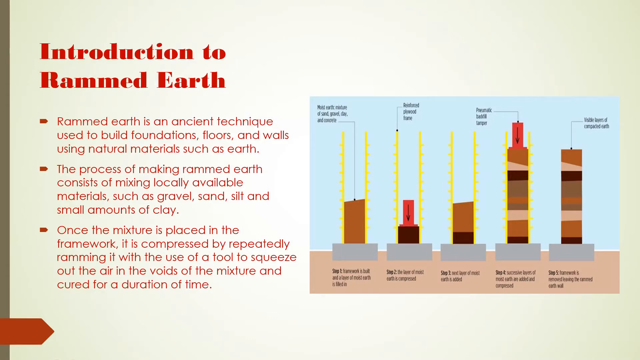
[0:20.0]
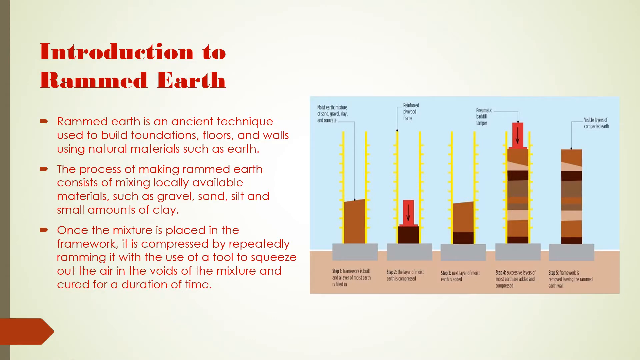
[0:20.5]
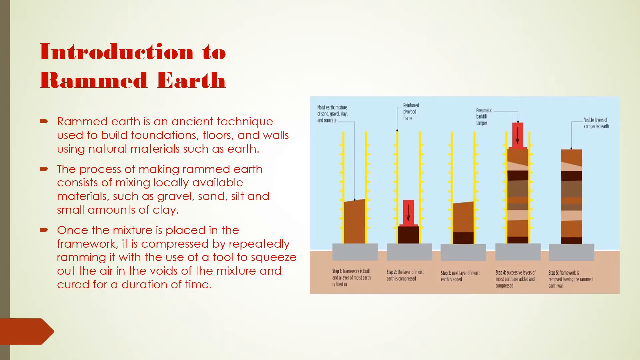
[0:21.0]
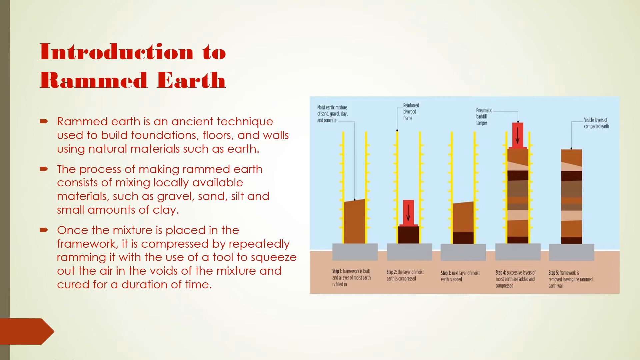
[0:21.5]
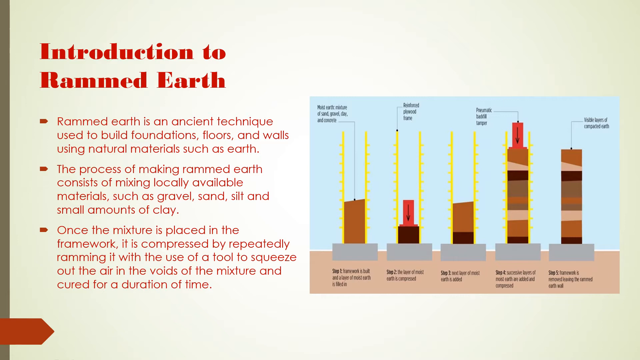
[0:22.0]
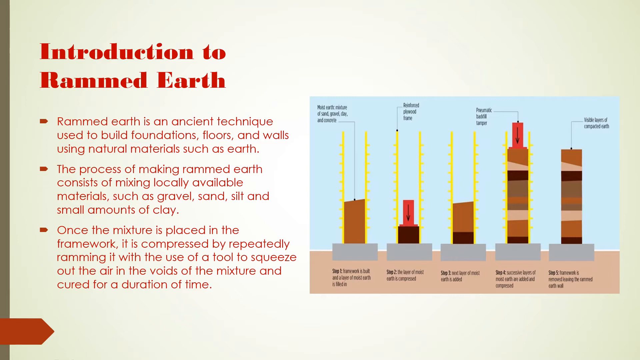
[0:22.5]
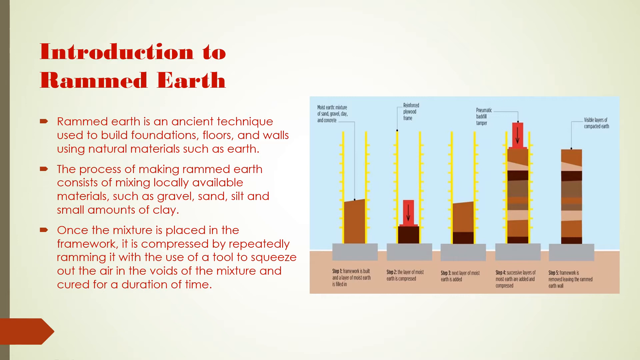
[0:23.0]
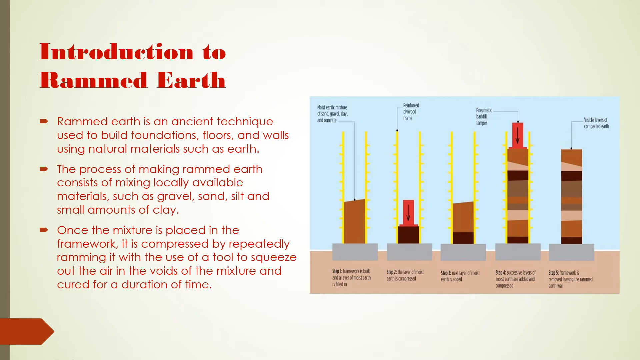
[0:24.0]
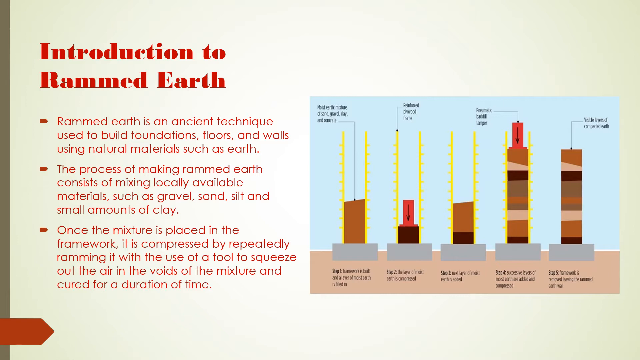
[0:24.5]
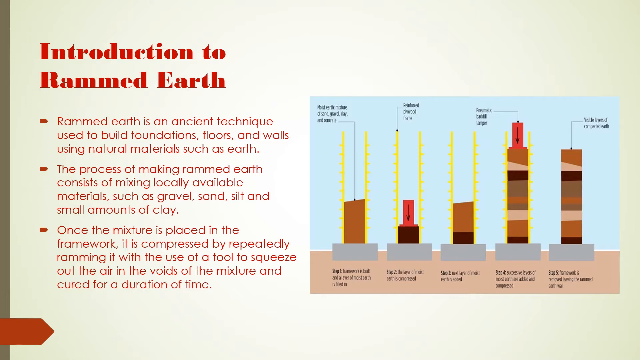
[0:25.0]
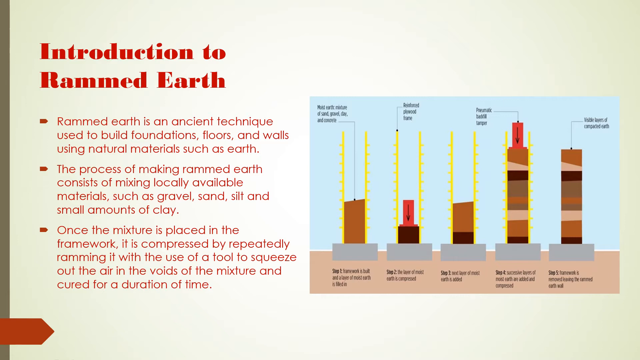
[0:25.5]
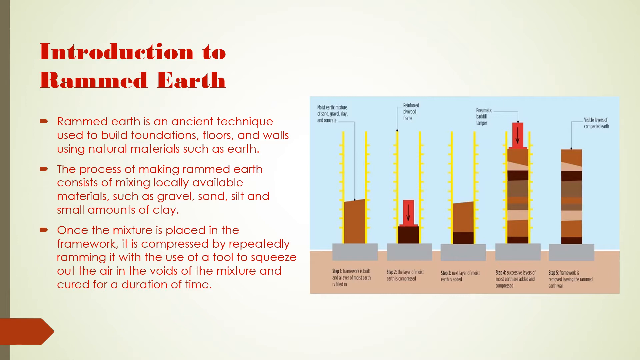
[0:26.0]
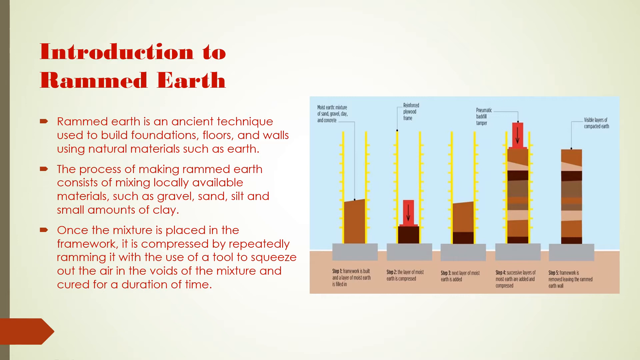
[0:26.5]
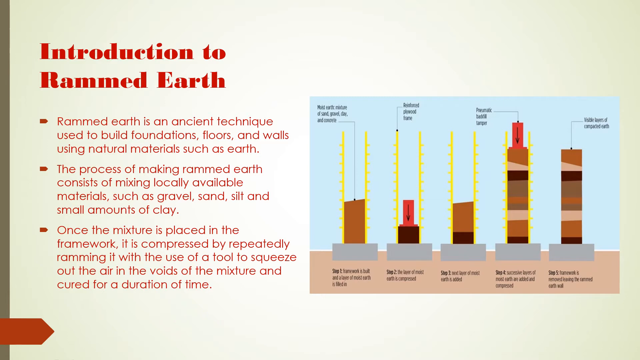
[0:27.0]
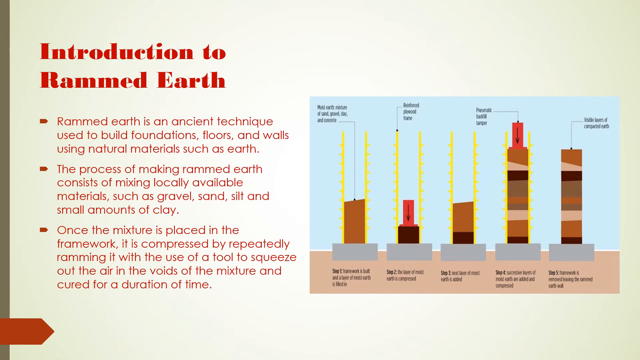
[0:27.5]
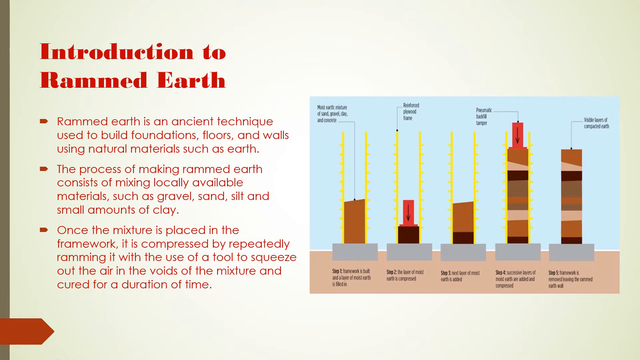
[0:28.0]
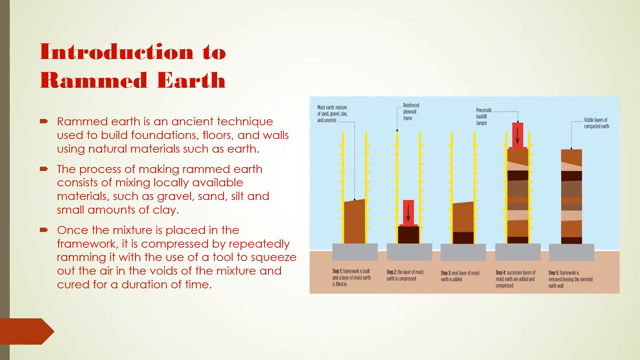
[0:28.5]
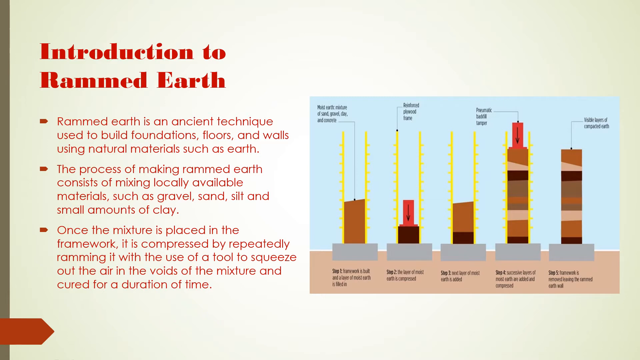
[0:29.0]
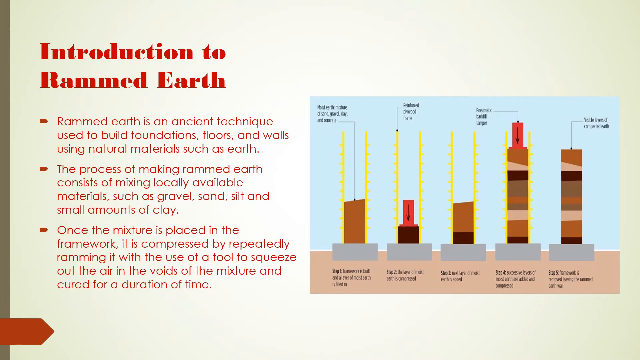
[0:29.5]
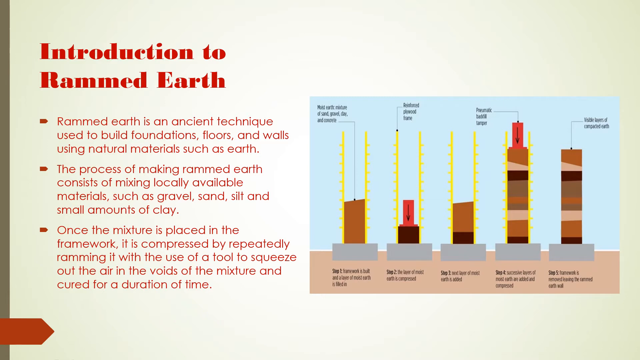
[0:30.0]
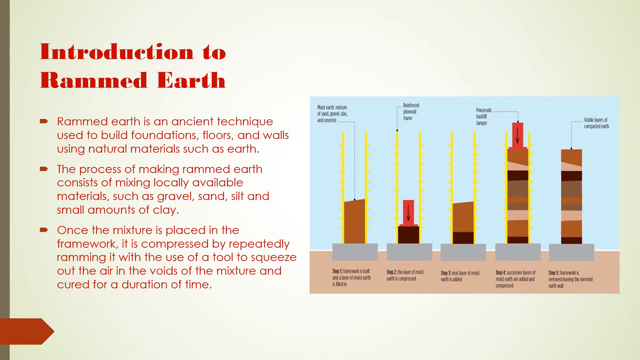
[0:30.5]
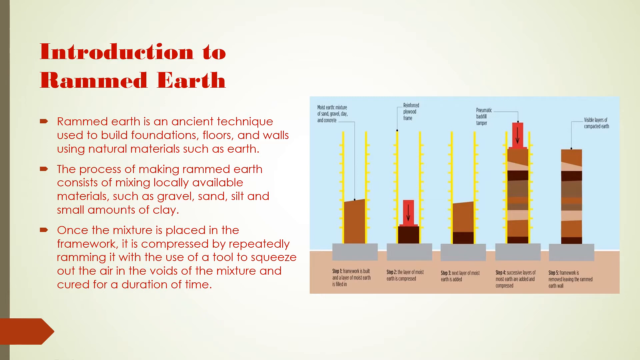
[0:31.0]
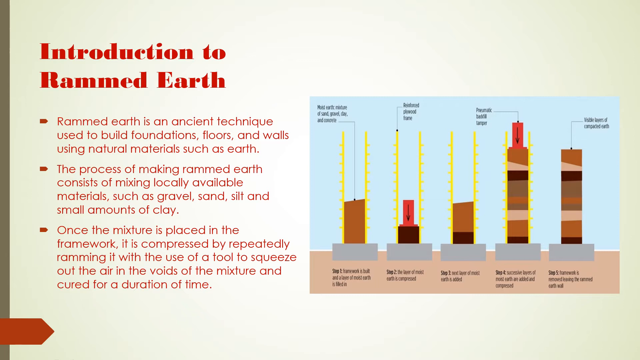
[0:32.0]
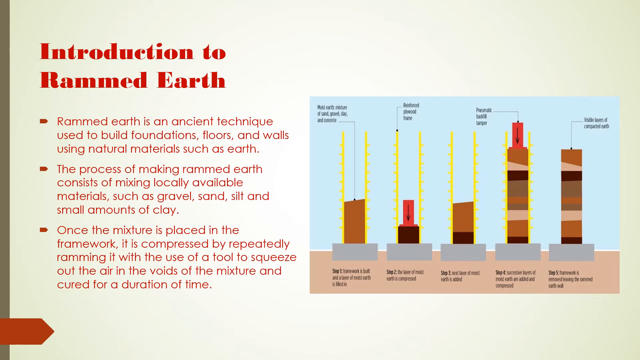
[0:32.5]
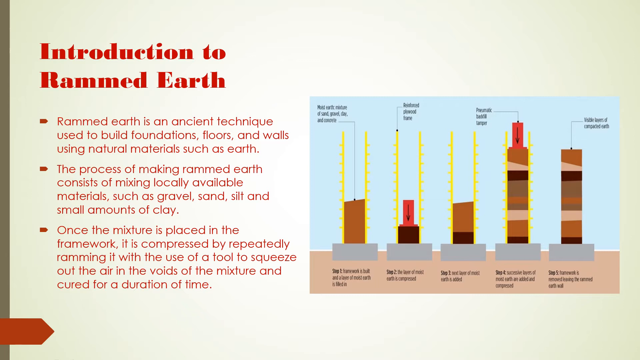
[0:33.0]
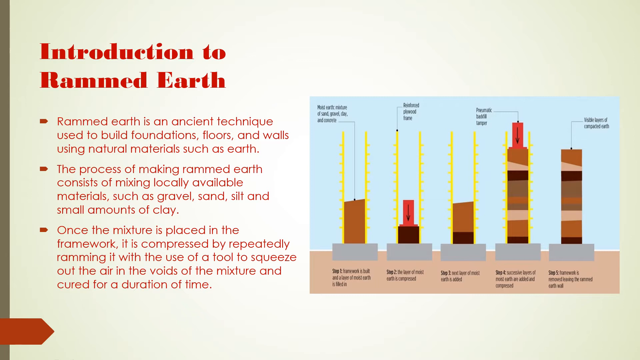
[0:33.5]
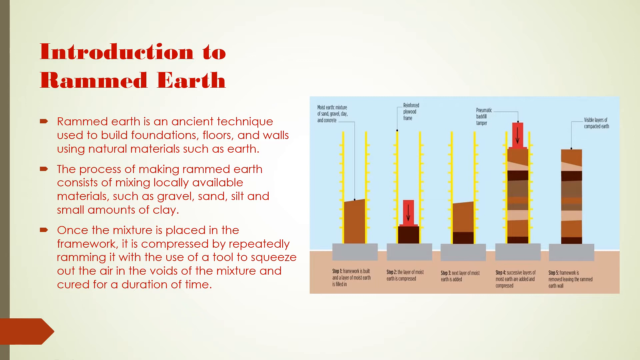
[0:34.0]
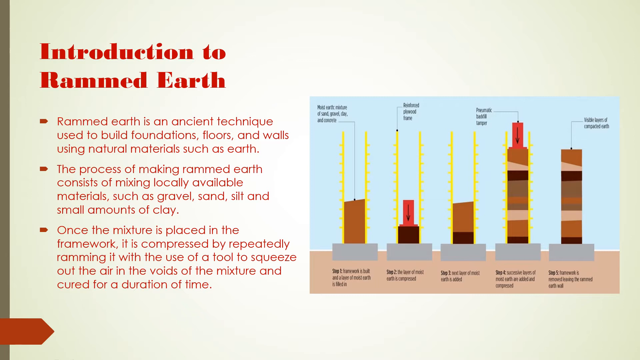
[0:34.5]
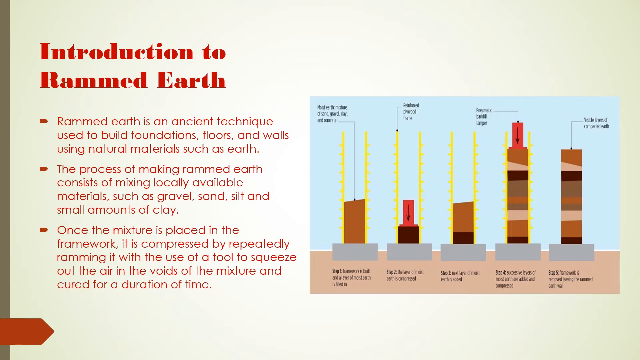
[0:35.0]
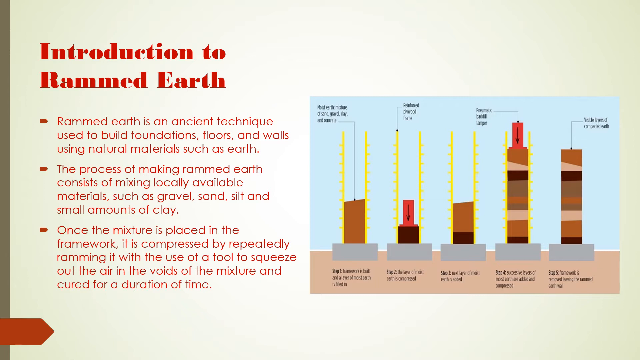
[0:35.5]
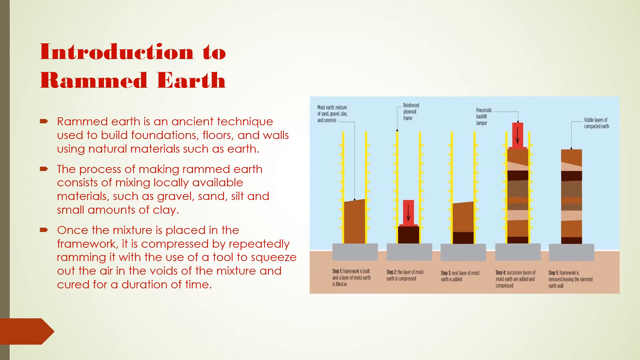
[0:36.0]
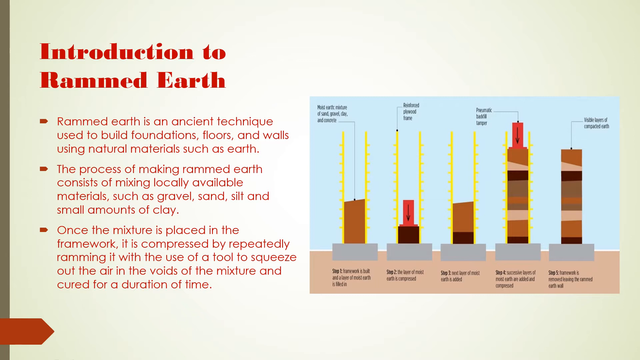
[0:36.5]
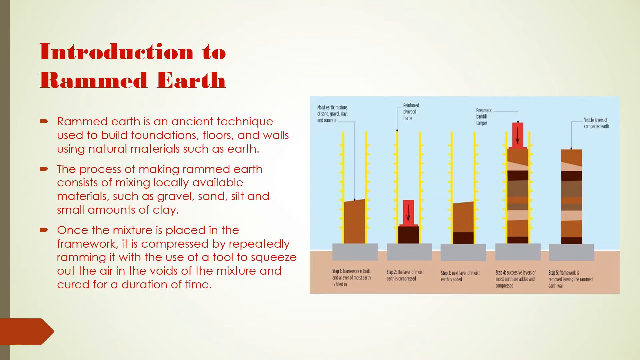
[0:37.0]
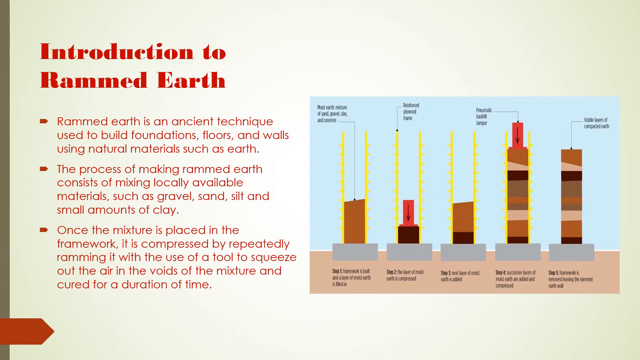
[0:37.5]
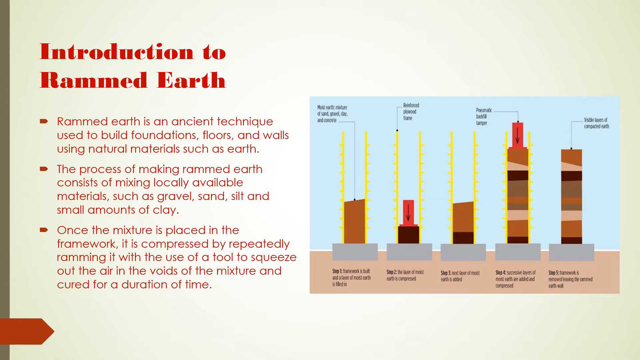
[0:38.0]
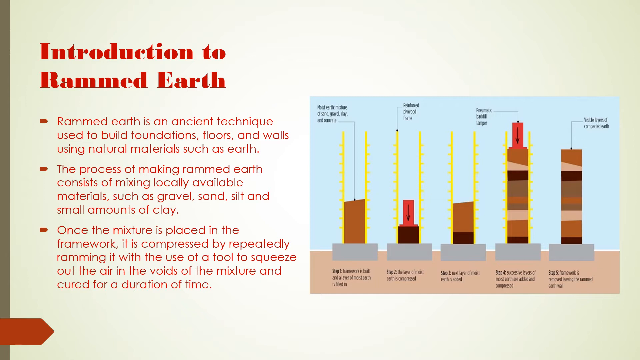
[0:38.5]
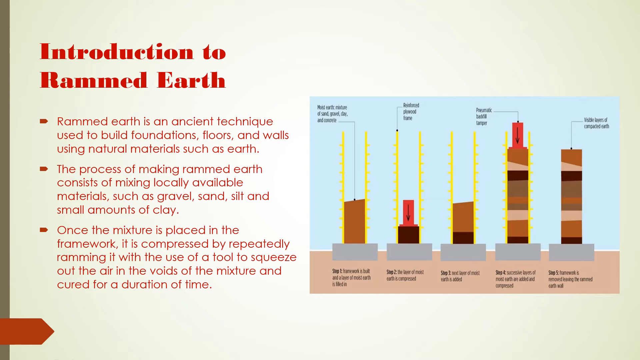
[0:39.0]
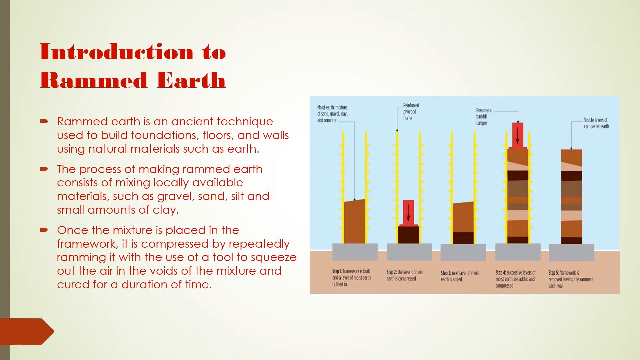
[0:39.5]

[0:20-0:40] The "introduction to rammed earth" slide stays on screen the whole time, with three bullet points of text on the left side. The first reads "rammed earth is an ancient technique used to build foundations, floors, and walls using natural materials such as earth." The second reads "the process of making rammed earth consists of mixing locally available materials such as gravel, sand, silt, and small amounts of clay." The third reads "once the mixture is placed in the framework, it is compressed by repeatedly ramming it with the use of a tool to squeeze out the air in the voids of the mixture and cured for a duration of time." On the right side is a graph showing the steps taken to make rammed earth: five small diagrams showing step 1, step 2, step 3, step 4, and step 5, which follow along with the bullet points on the left.